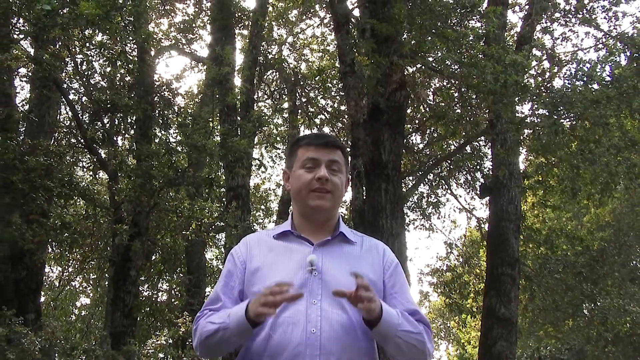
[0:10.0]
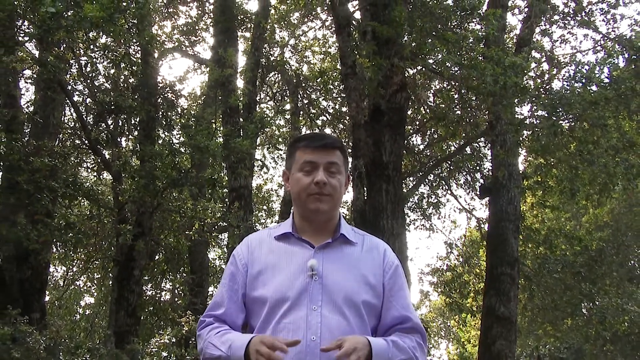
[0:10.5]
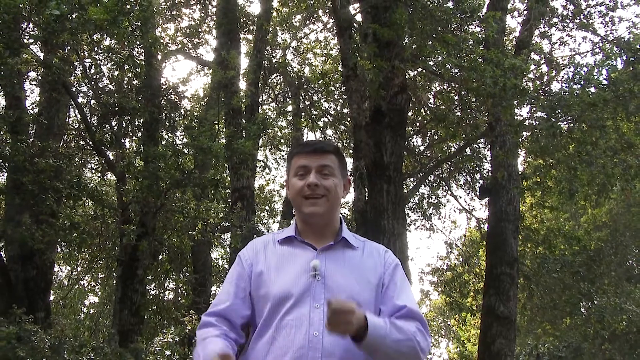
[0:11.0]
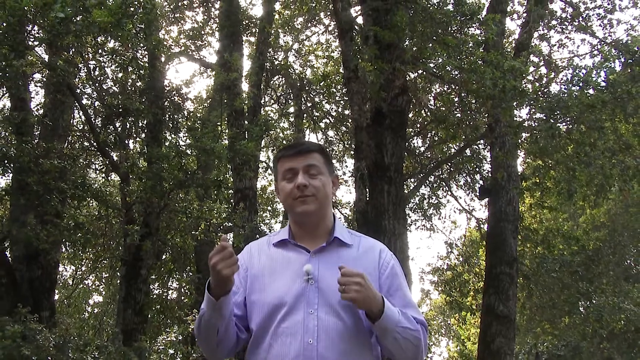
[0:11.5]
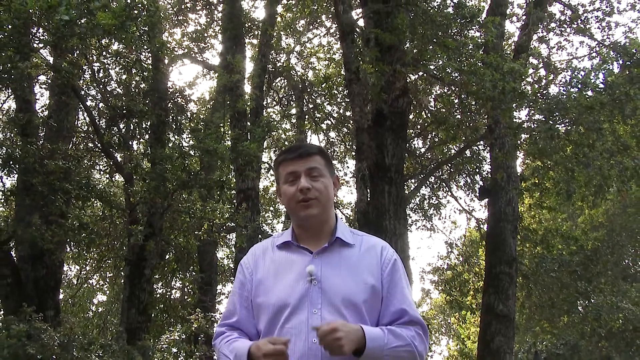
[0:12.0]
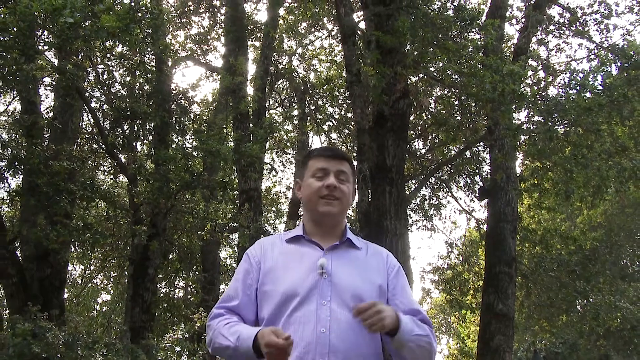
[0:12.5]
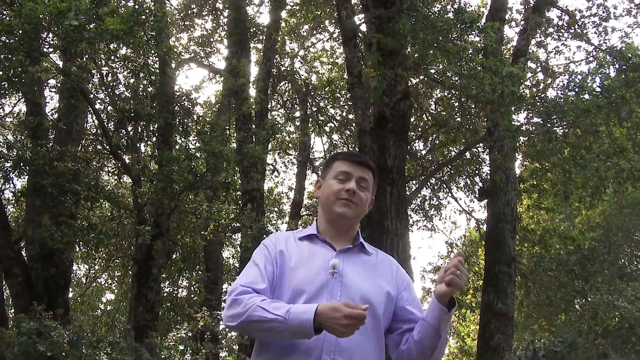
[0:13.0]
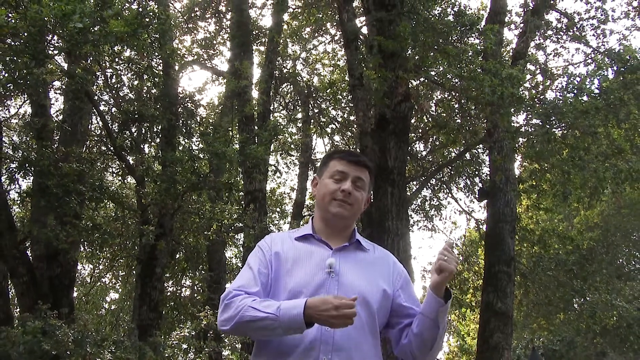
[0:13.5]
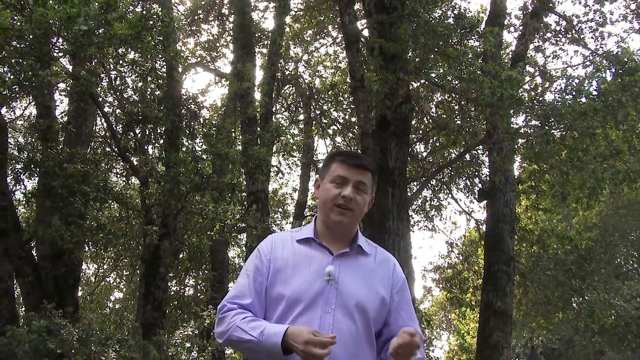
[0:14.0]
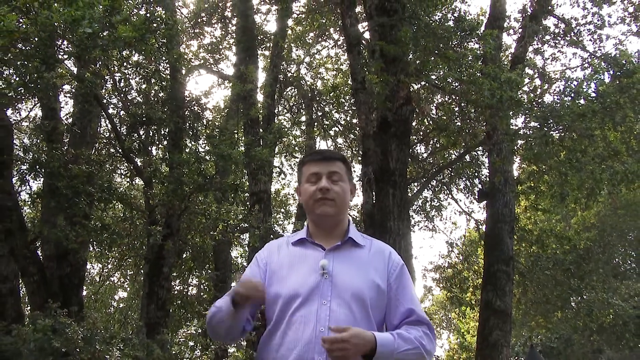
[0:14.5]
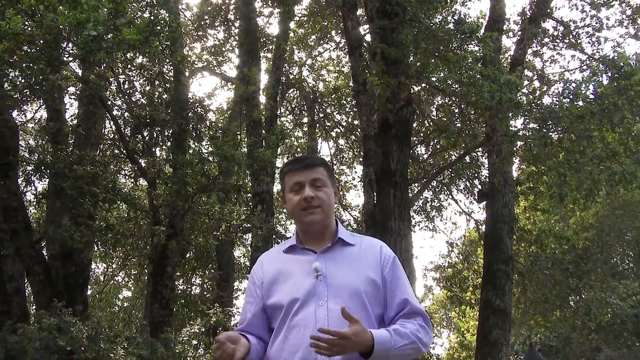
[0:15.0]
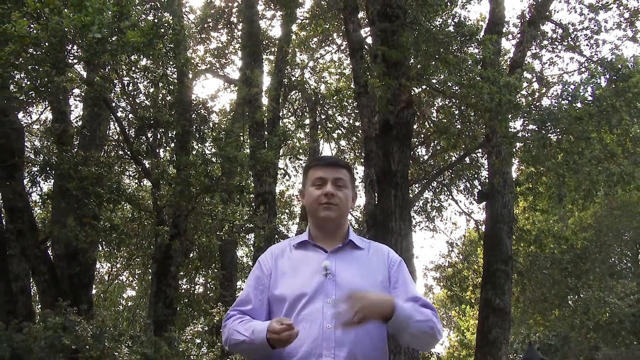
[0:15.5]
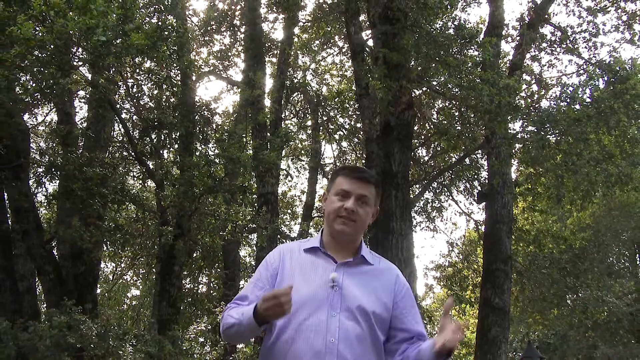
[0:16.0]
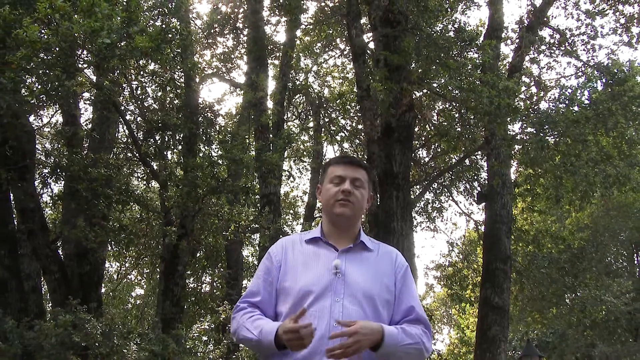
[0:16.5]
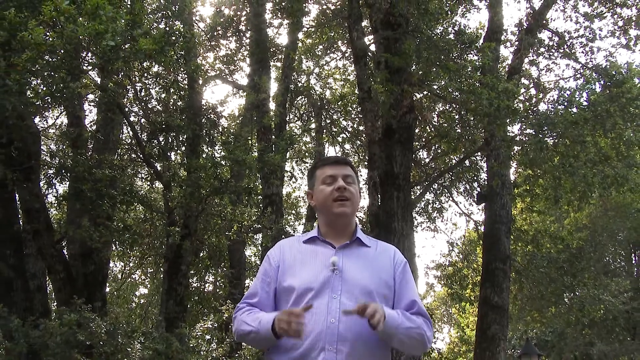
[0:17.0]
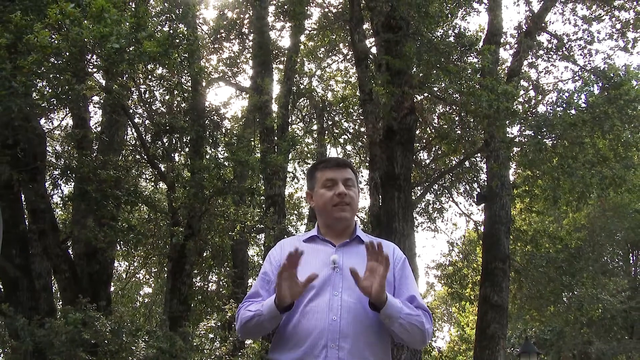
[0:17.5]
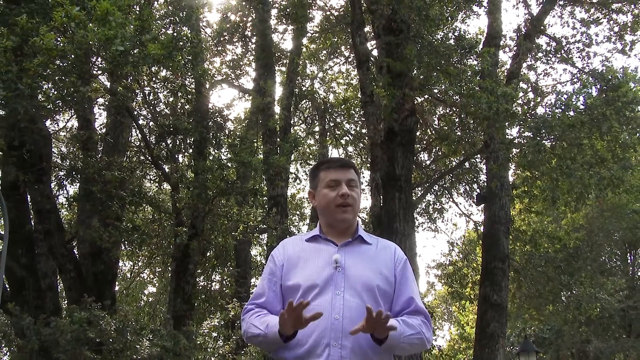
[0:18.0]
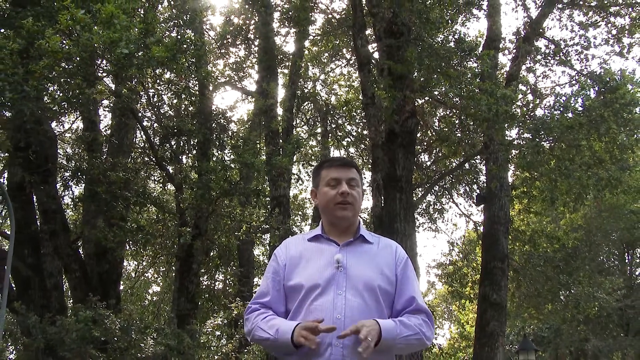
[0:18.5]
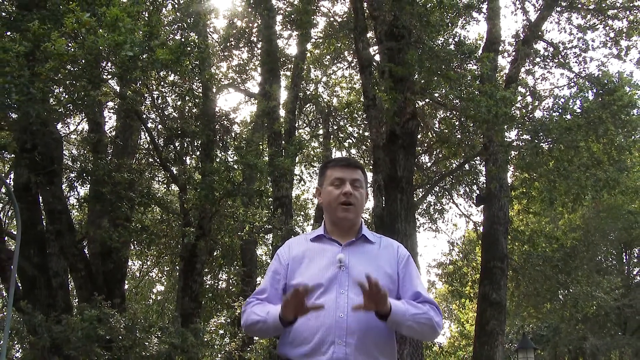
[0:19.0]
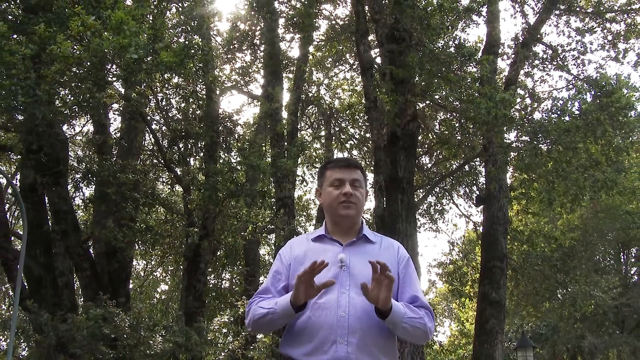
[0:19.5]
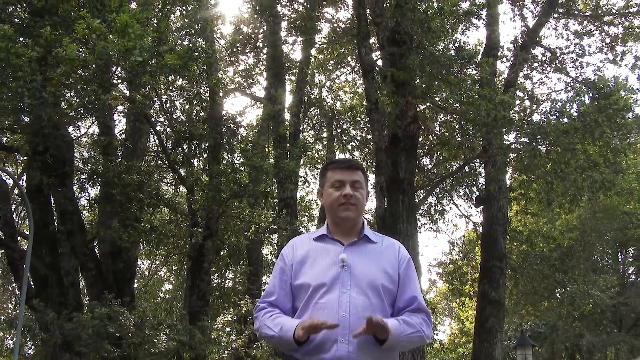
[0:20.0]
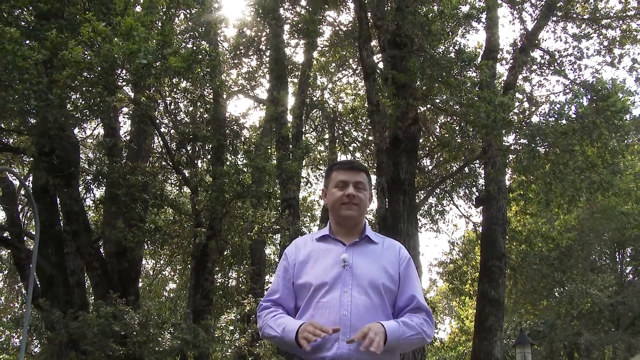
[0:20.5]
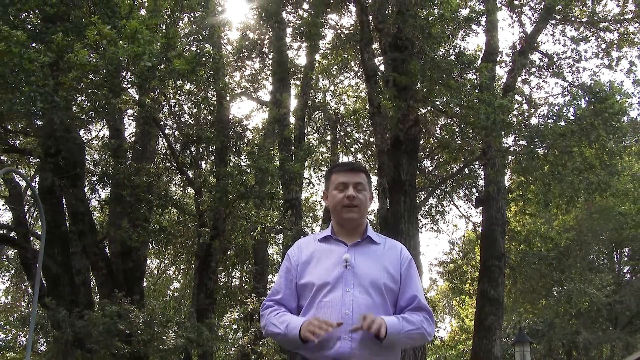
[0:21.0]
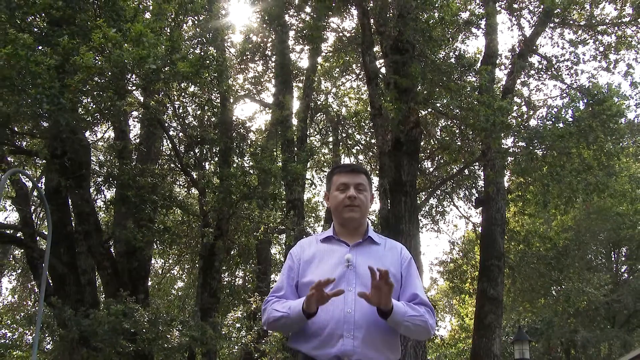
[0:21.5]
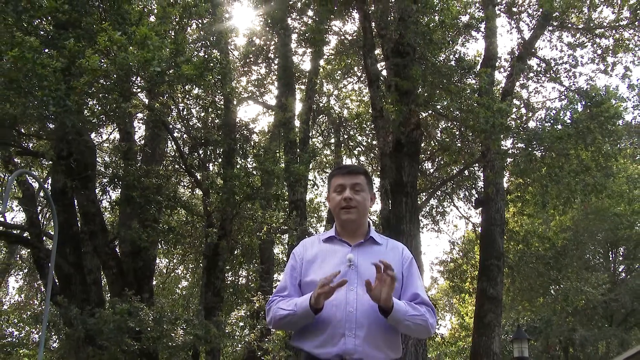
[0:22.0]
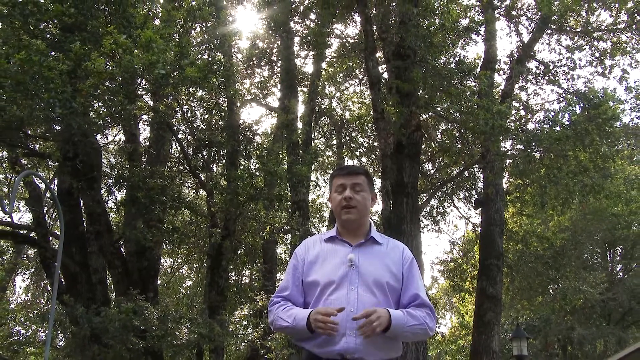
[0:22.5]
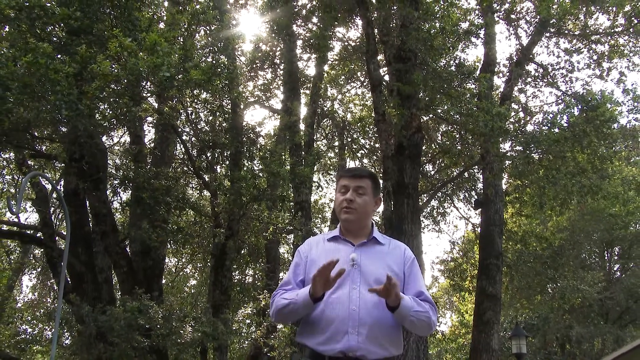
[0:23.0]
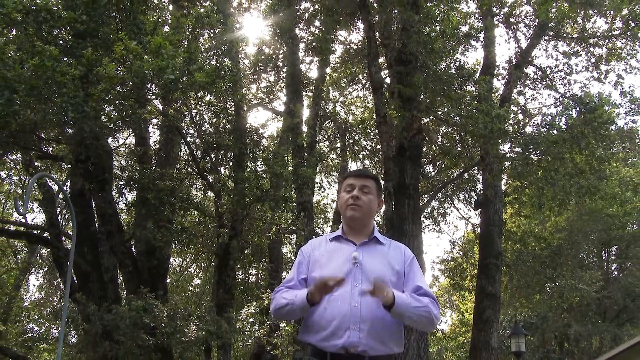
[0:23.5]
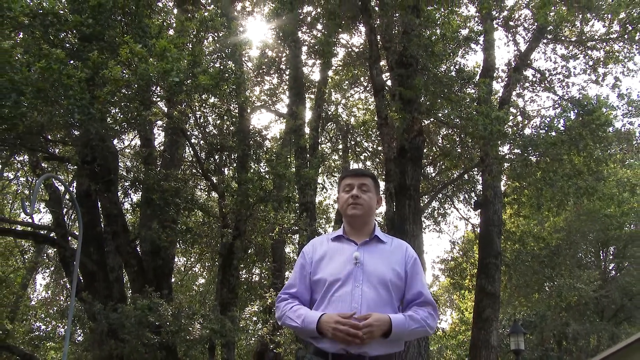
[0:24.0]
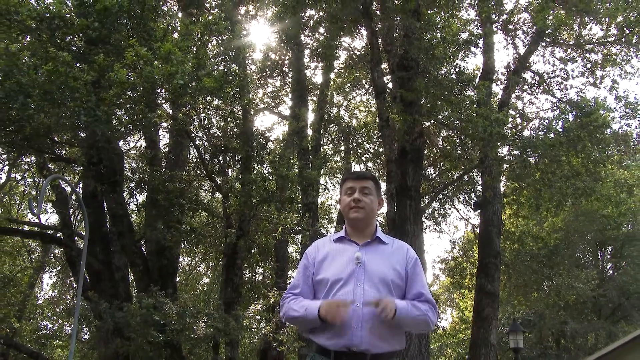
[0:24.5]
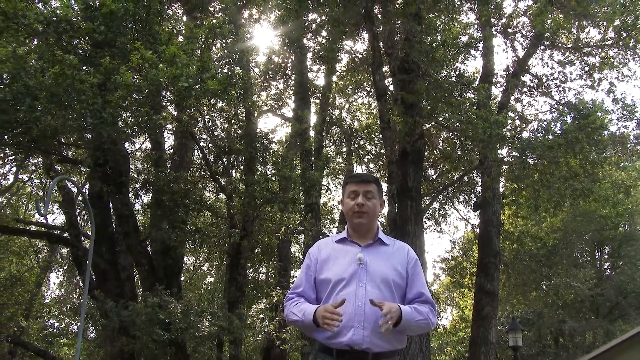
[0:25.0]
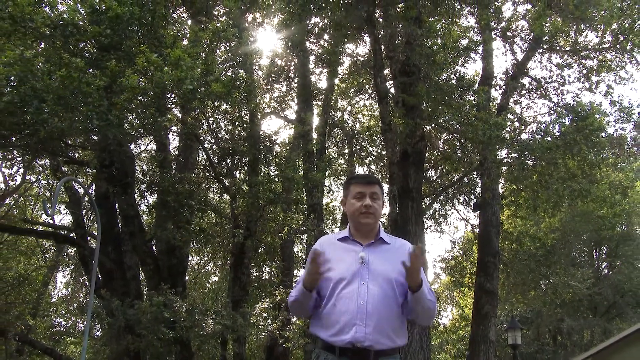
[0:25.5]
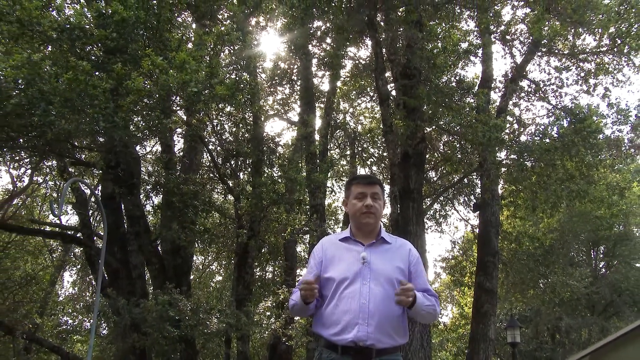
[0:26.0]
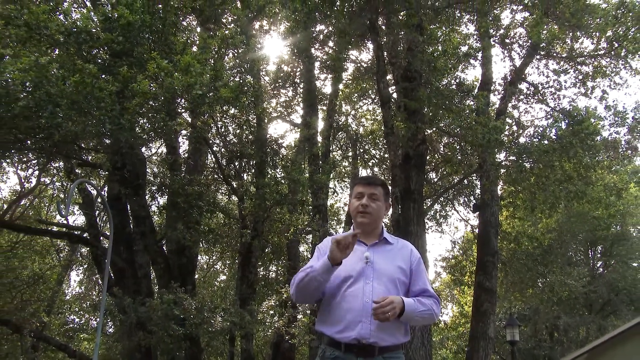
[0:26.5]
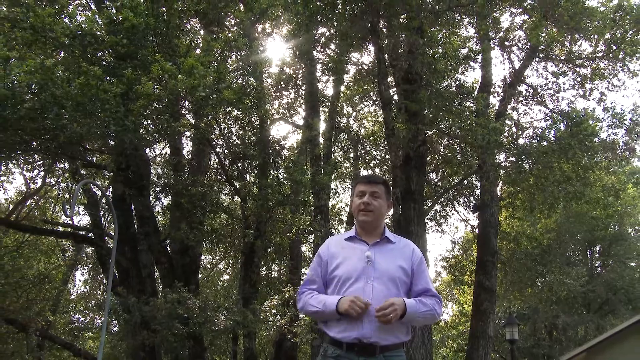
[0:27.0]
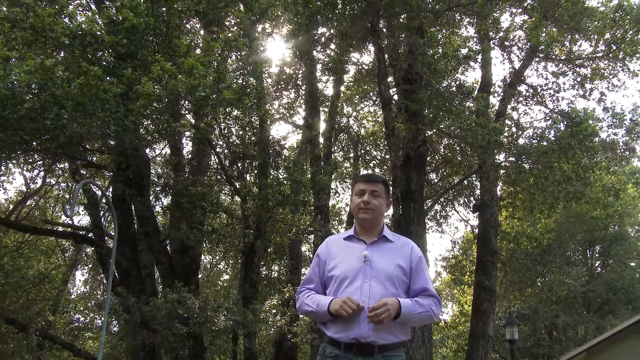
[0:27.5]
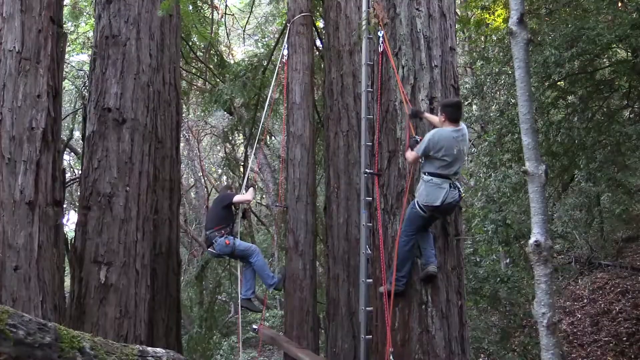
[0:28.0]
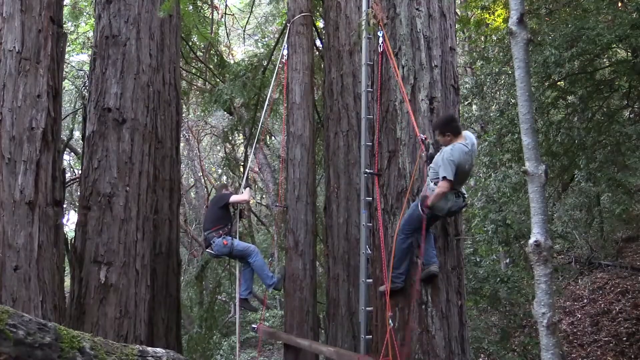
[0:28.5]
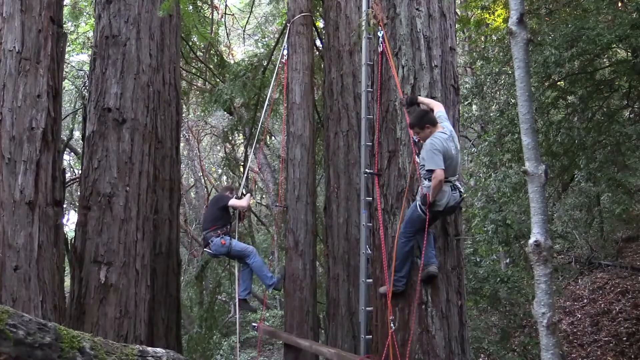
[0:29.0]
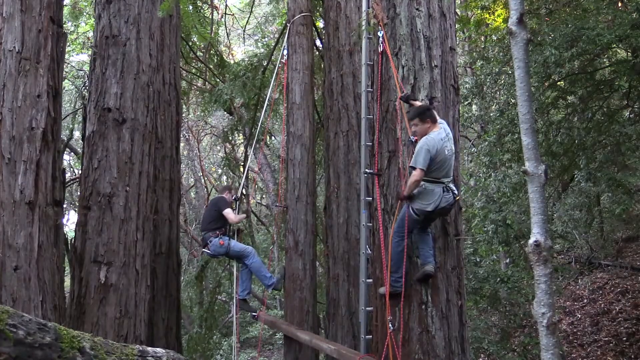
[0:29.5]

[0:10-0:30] The middle-aged man in the light blue dress shirt, standing in the dense forest, continues speaking directly to the camera, gesturing with his hands to accentuate what he is saying. He brings both hands up and then down, then one hand up and down and then the other hand up and down. He also makes a semicircle movement with his right arm, bringing it away from his body and then back, and does the exact same motion with his left arm. As the camera pans out, the dense forest behind him comes into better view, and he can be seen wearing dark dress pants. The scene then changes to a very large tree with an extremely wide base. Two men are securely attached to the tree by rope, their feet attached to the tree with clamps, and each is pulling the rope.